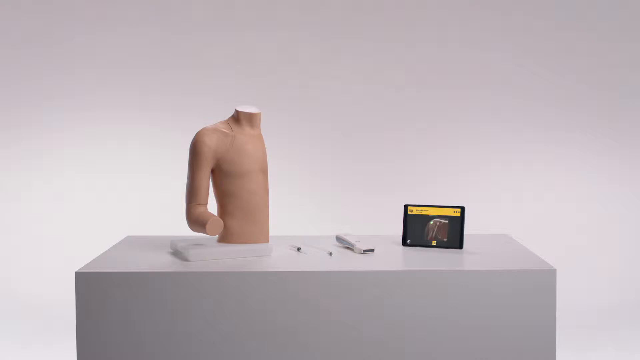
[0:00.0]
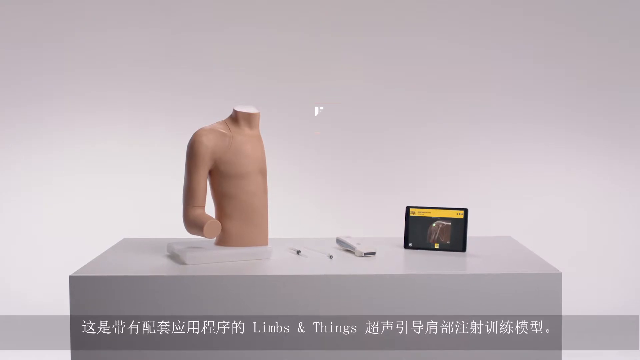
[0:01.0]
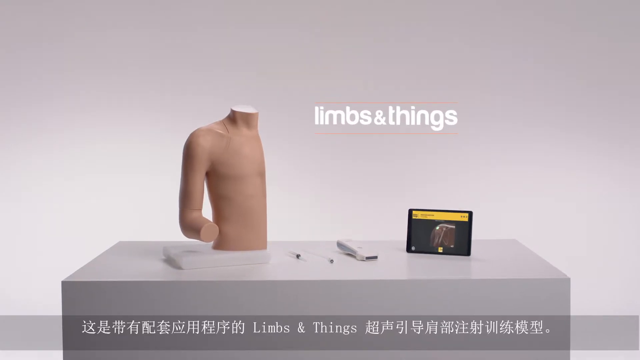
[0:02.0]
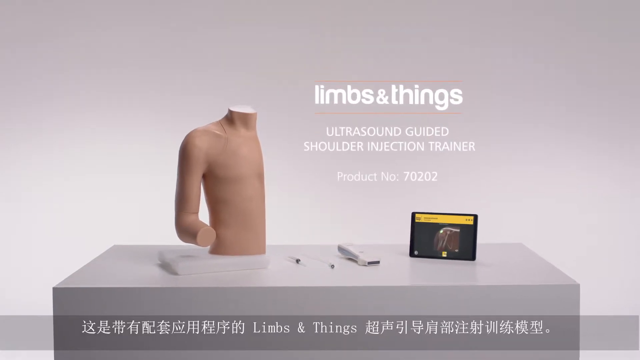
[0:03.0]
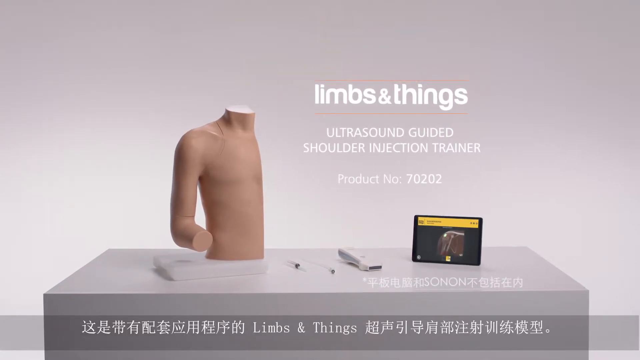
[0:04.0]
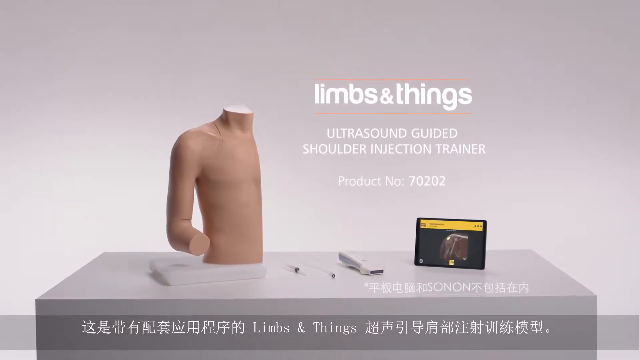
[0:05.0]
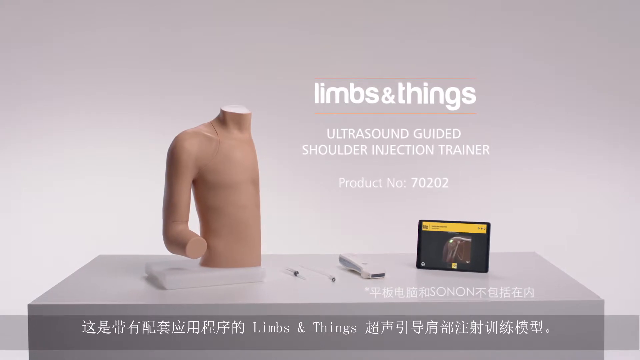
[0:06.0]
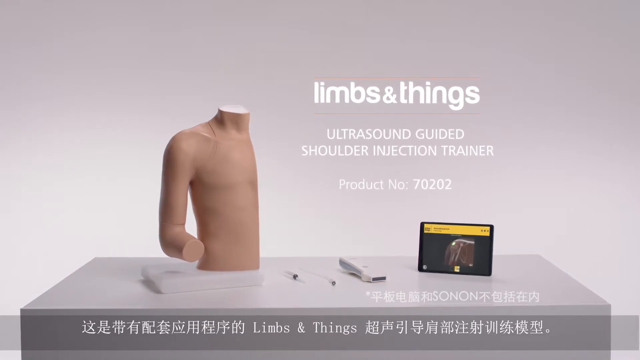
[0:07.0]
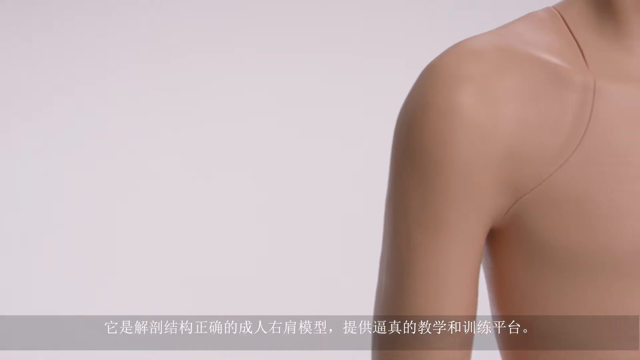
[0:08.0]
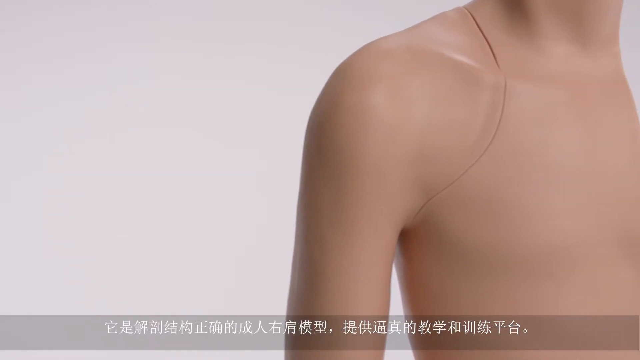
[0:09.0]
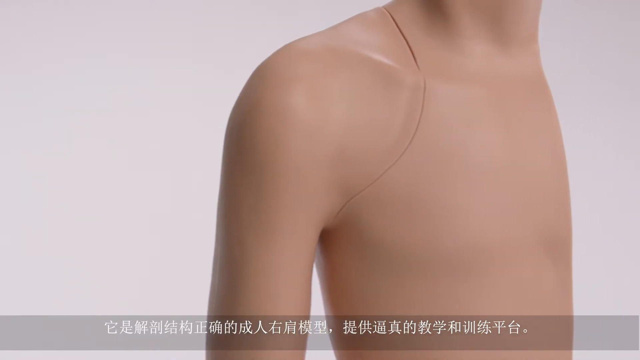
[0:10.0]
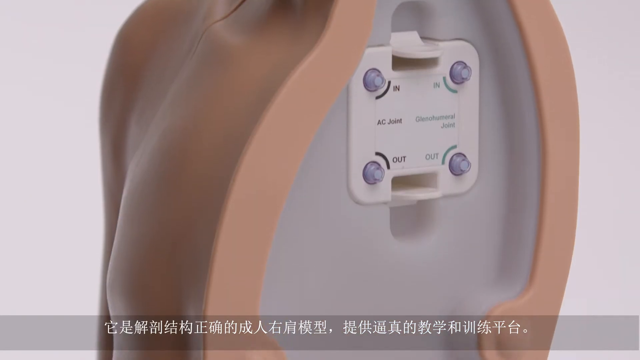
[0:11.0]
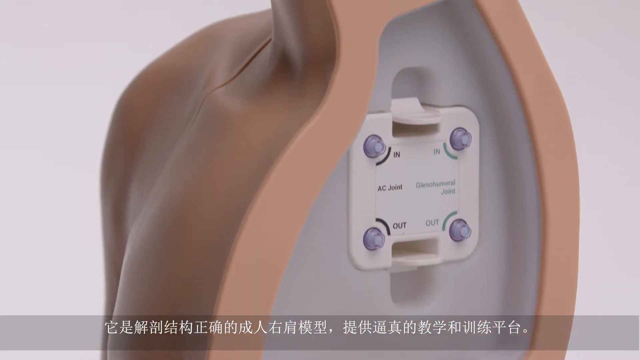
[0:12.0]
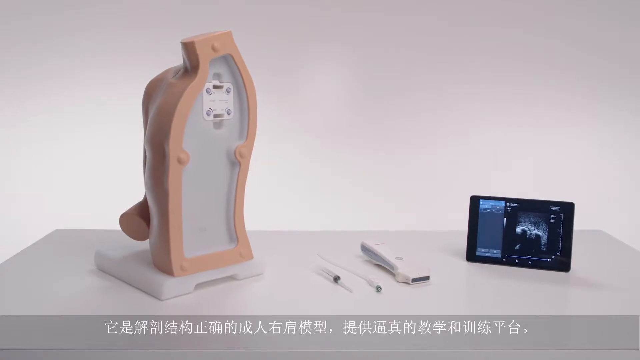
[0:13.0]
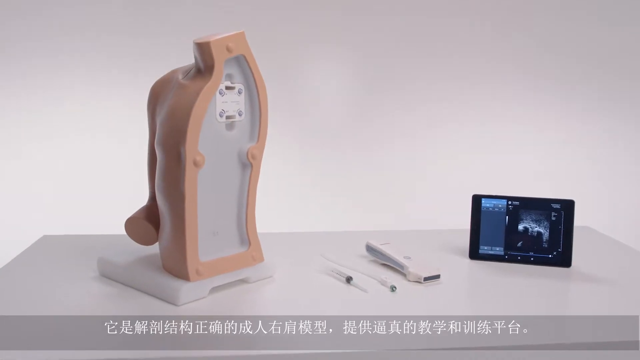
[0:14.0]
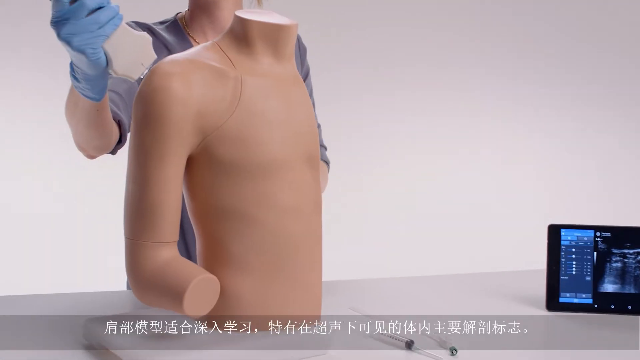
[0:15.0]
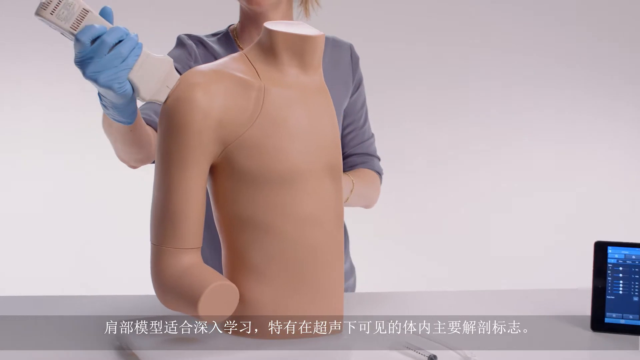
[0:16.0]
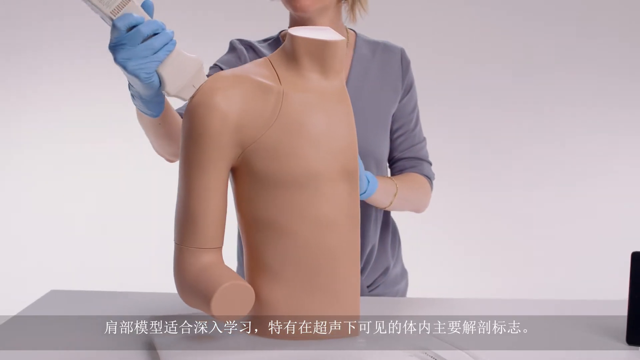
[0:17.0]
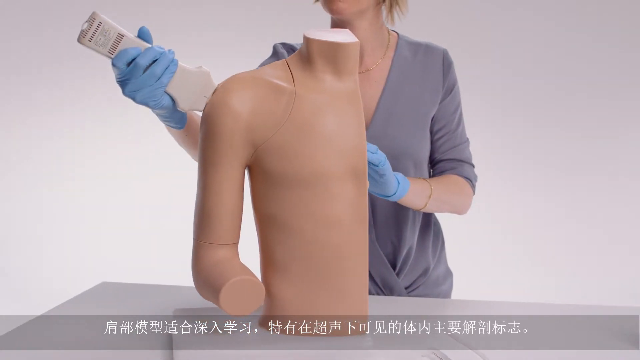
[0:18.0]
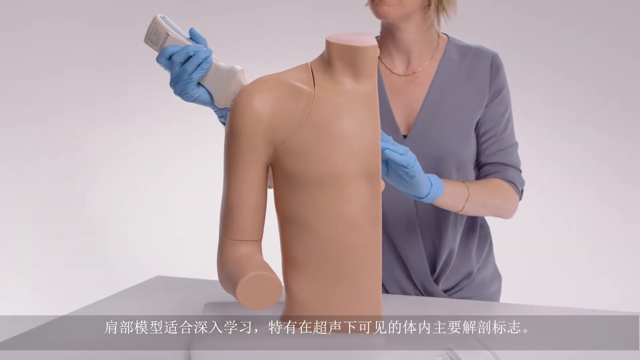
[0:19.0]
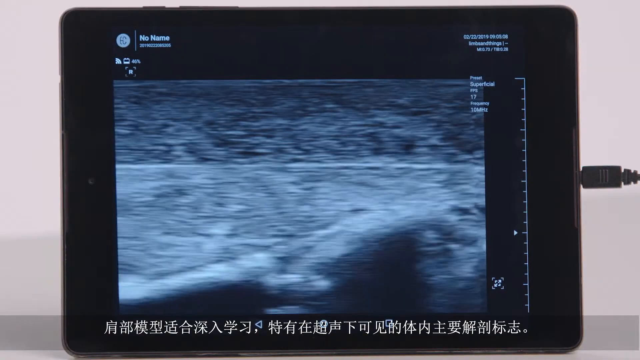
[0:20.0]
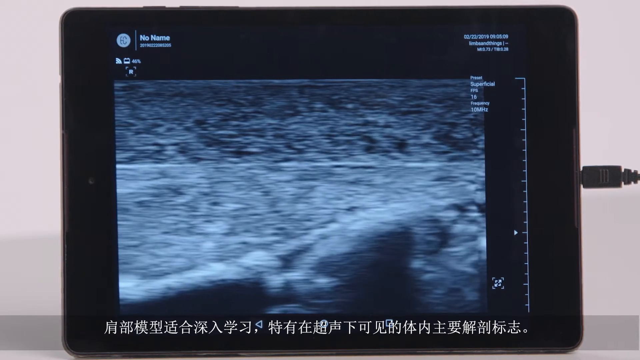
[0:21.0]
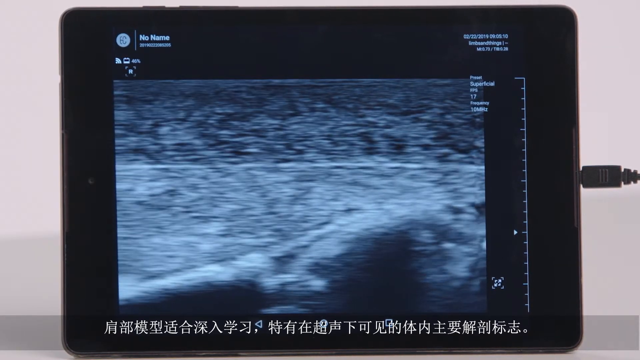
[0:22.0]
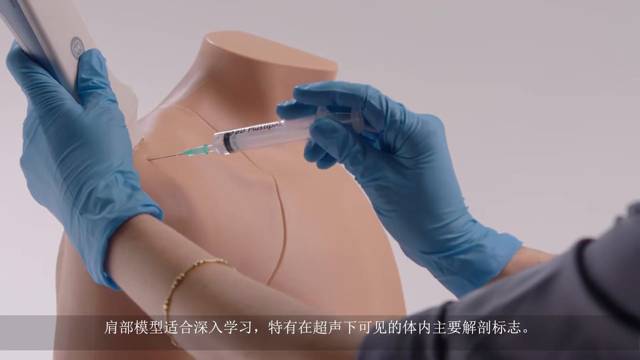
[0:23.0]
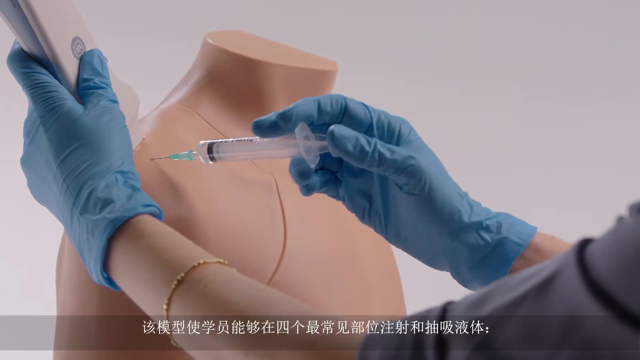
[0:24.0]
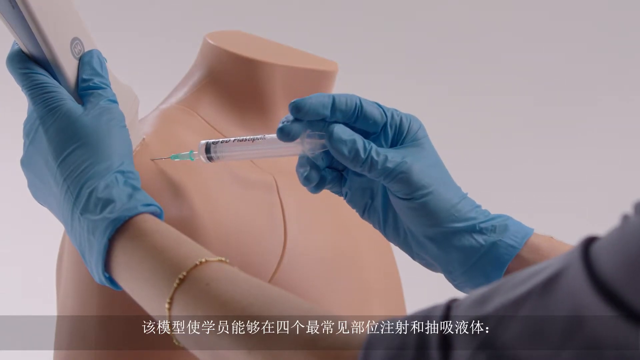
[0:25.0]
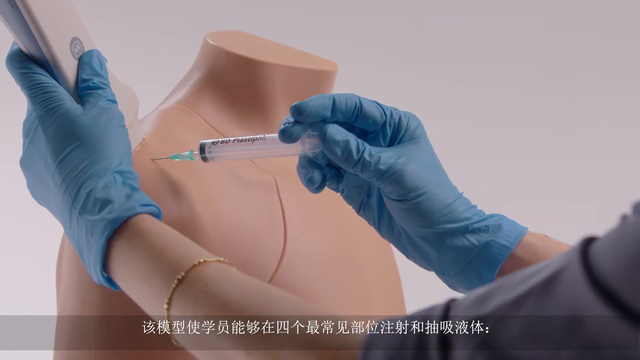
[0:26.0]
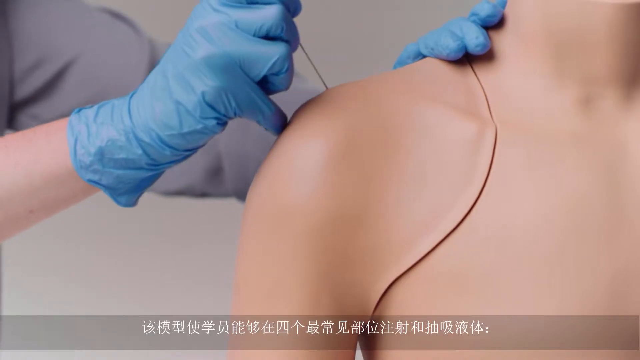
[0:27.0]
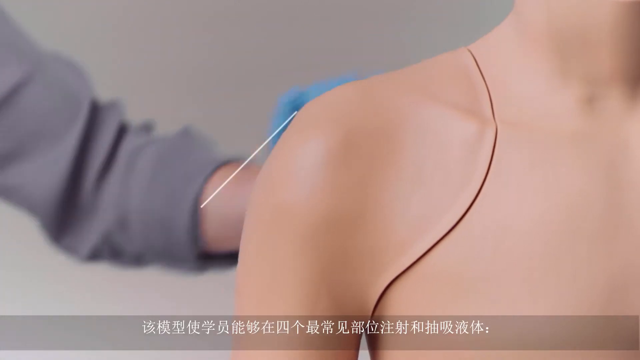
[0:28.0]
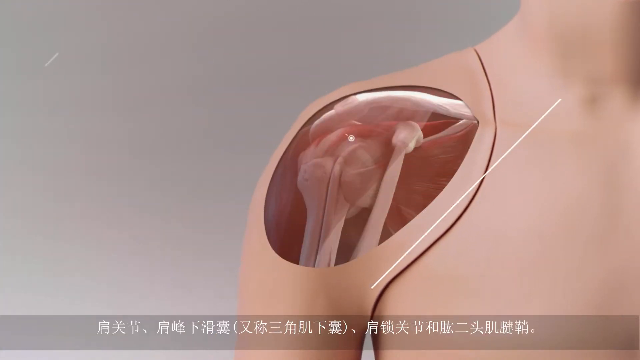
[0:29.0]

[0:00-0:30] A three-dimensional rubber dummy for medical procedures or training is set up on a table; it is just the torso, cut in half diagonally down the chest. Next to it is an iPad and what looks like some sort of scanner. Text on the screen reads "limbs and things, ultrasound guided shoulder injection trainer" along with its product number, 70202. Writing at the bottom of the screen appears to be in an Asian language, possibly Chinese. A nurse comes along, puts some gel on the dummy's shoulder, and uses the scanner instrument to scan the shoulder, practicing how to scan it. As she does this she rotates it, and the iPad attached to the scanner shows what is going on inside the dummy's shoulder. She then puts a syringe with a needle directly into the shoulder and injects some liquid.